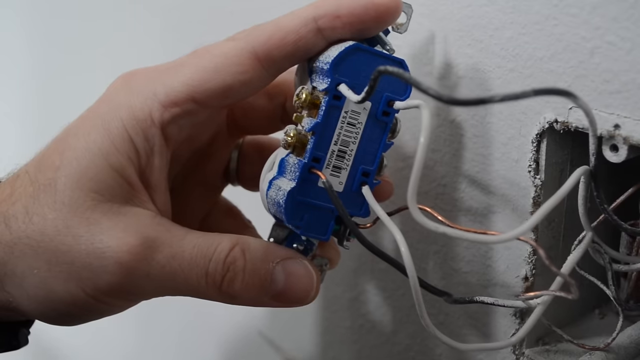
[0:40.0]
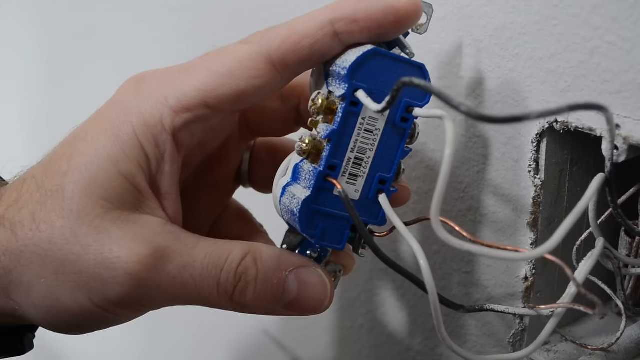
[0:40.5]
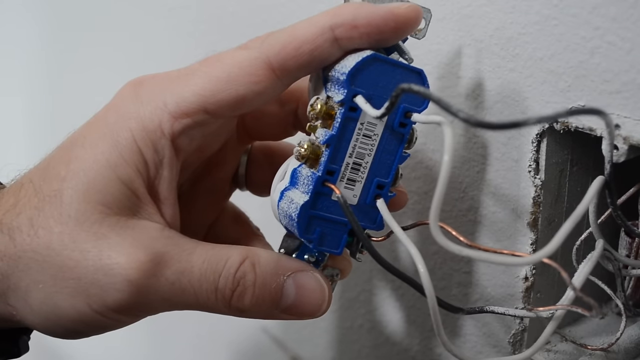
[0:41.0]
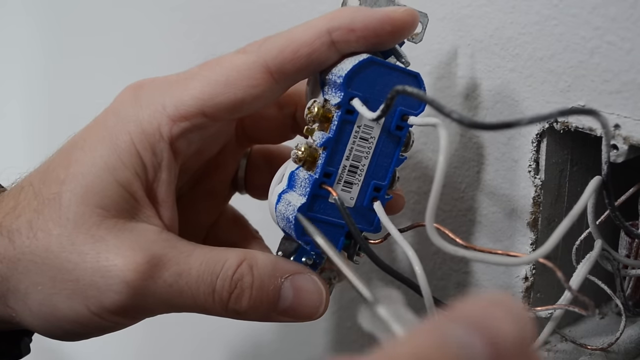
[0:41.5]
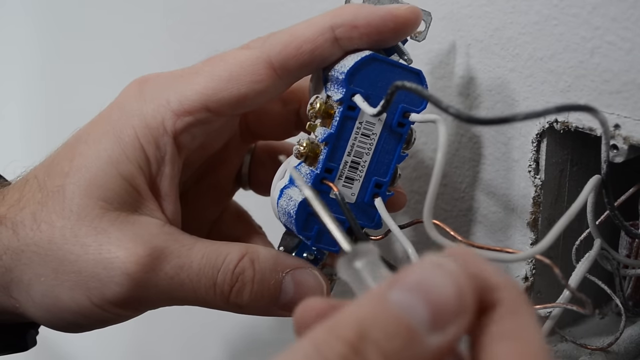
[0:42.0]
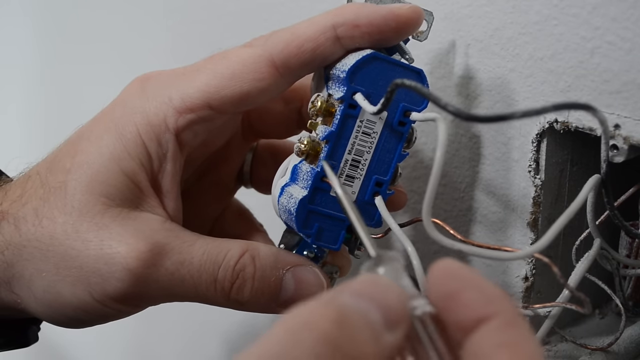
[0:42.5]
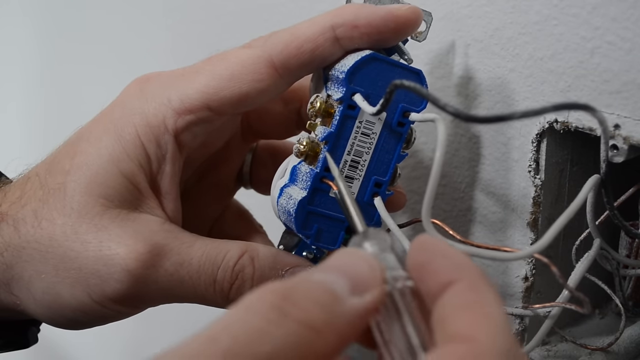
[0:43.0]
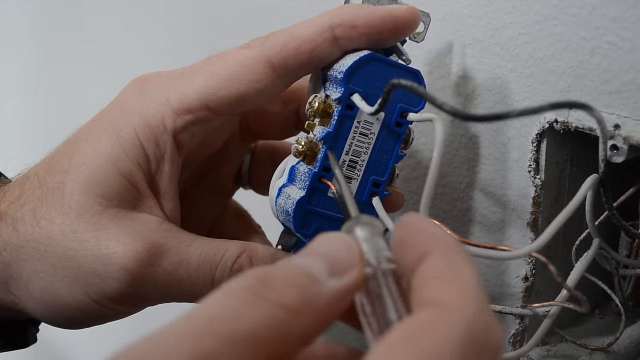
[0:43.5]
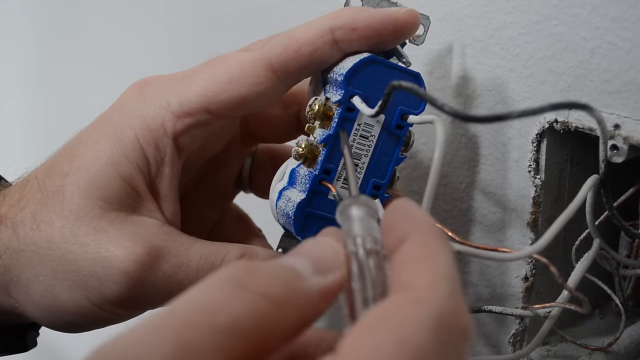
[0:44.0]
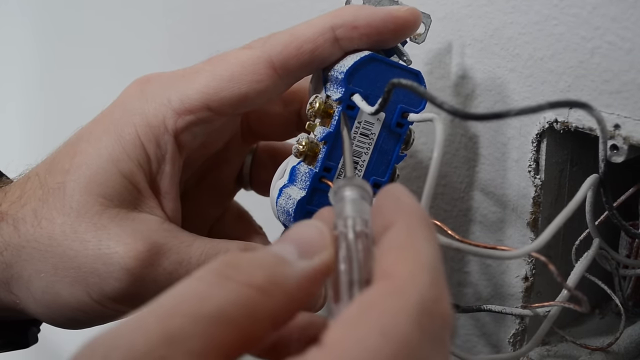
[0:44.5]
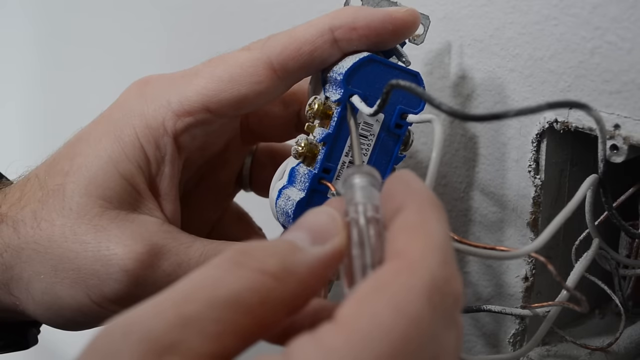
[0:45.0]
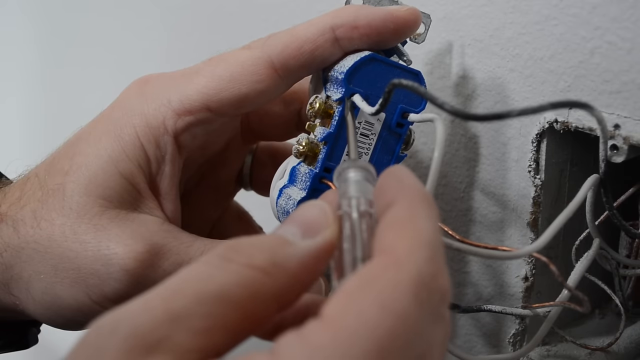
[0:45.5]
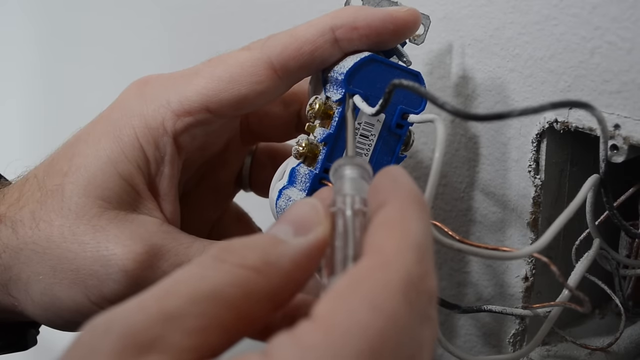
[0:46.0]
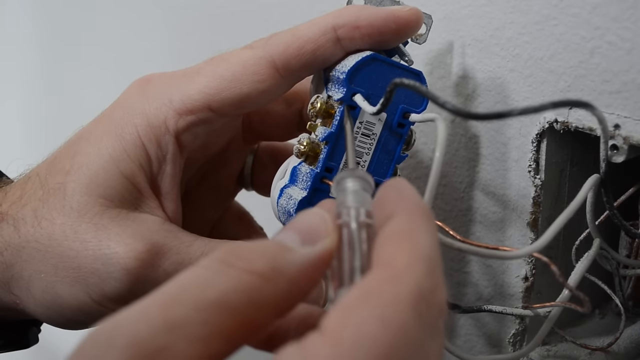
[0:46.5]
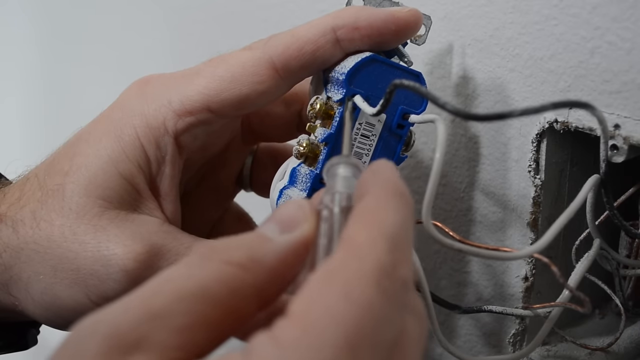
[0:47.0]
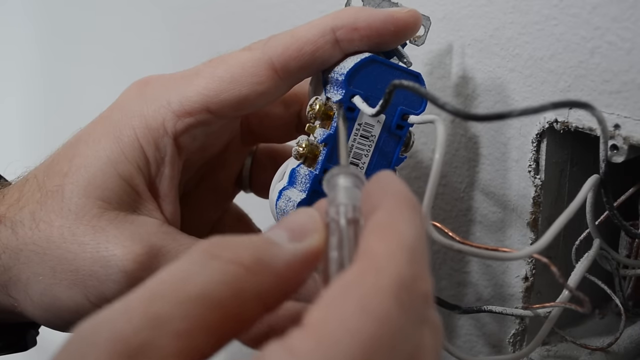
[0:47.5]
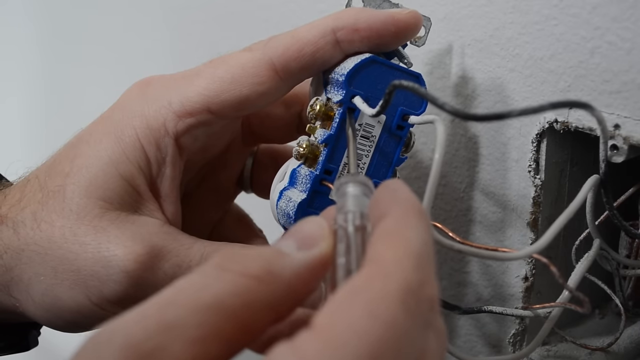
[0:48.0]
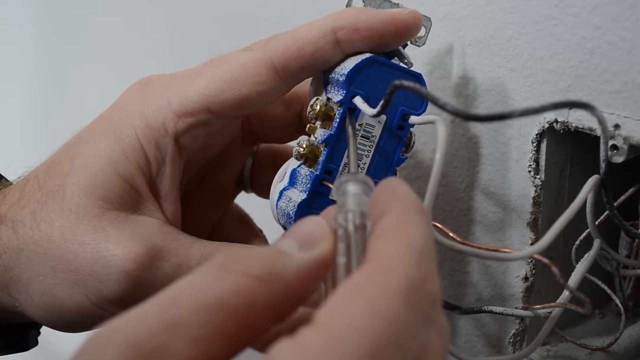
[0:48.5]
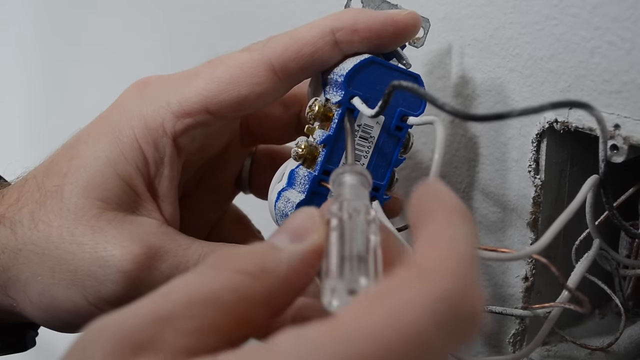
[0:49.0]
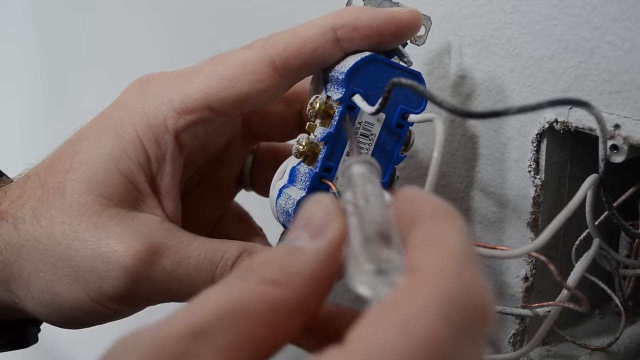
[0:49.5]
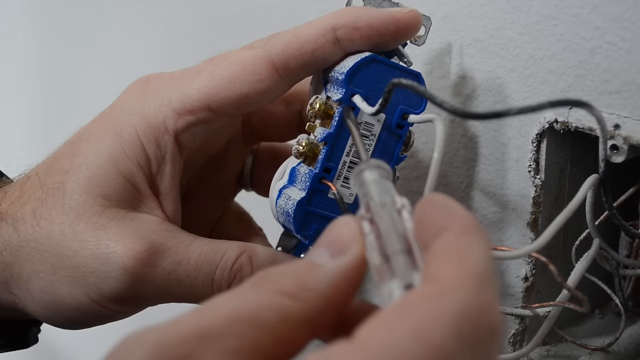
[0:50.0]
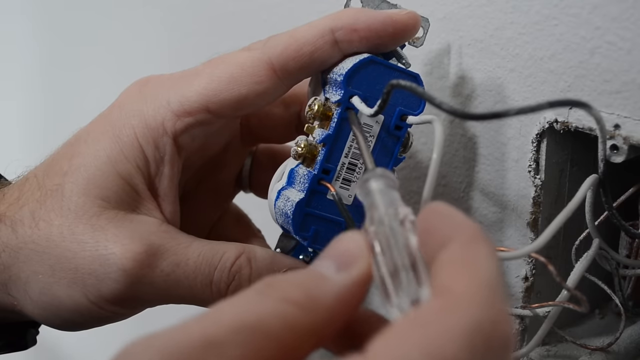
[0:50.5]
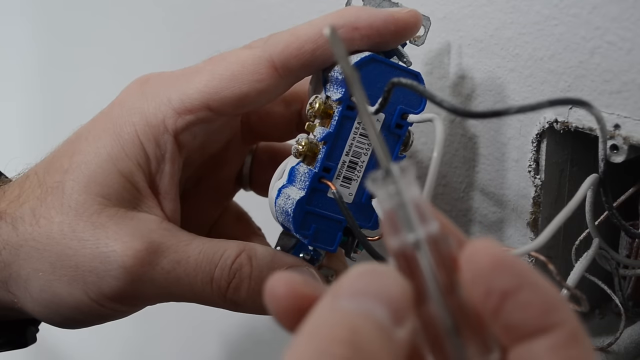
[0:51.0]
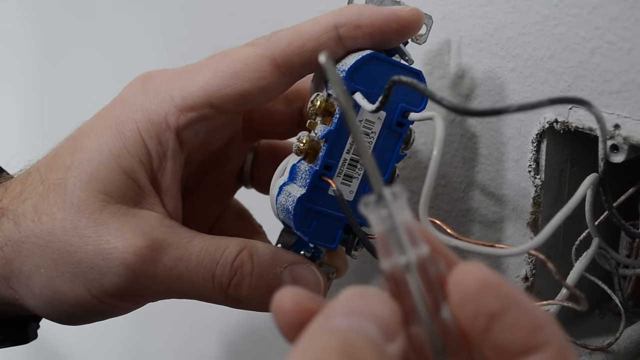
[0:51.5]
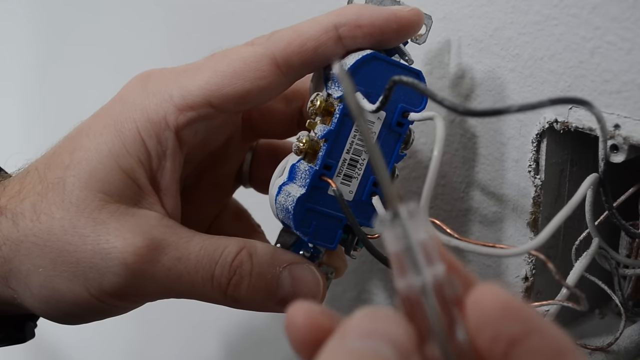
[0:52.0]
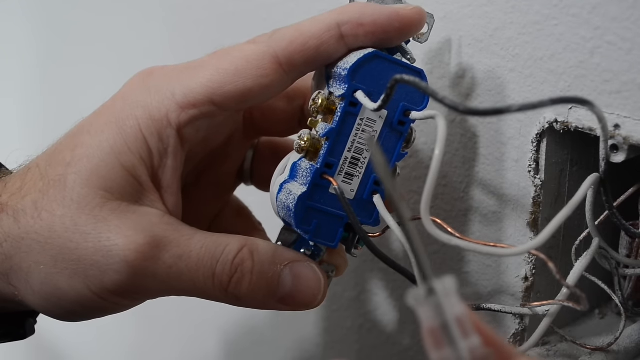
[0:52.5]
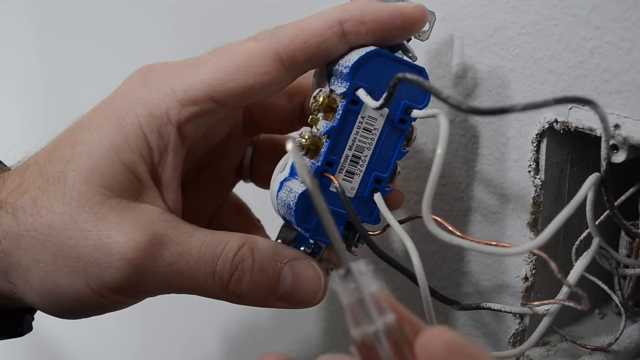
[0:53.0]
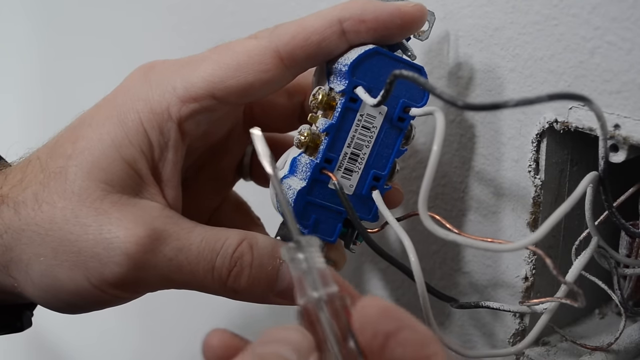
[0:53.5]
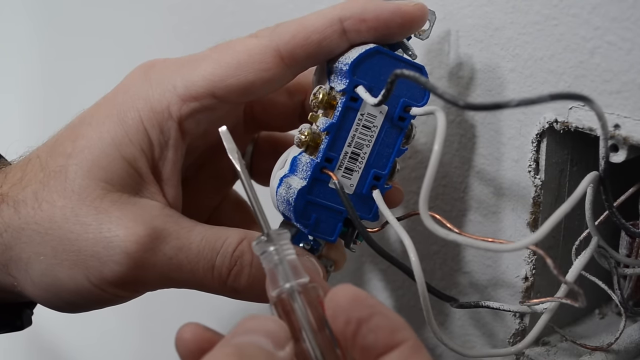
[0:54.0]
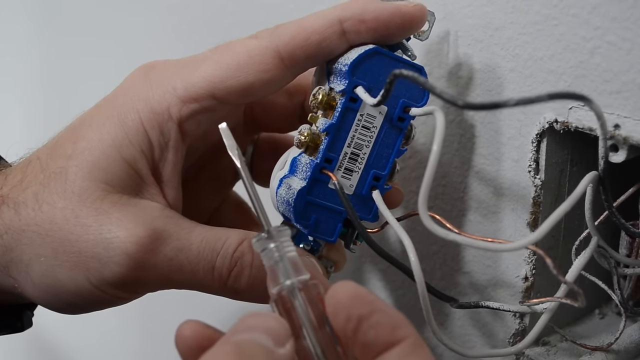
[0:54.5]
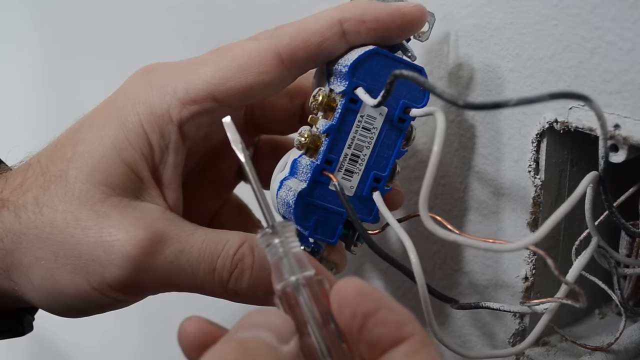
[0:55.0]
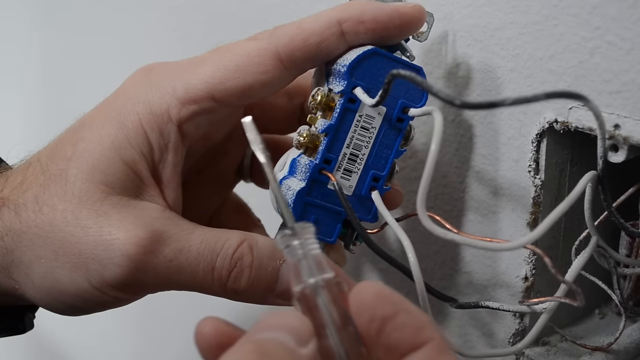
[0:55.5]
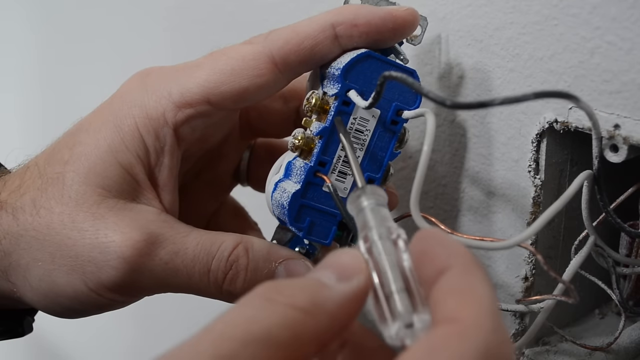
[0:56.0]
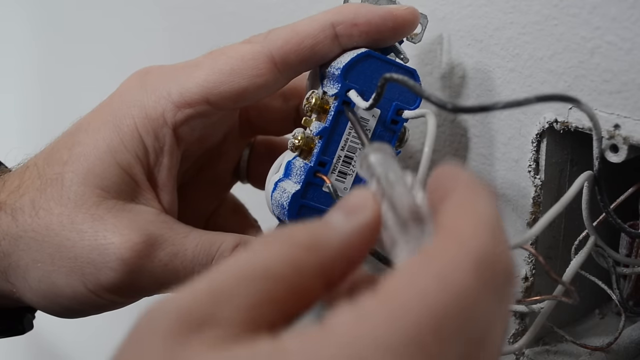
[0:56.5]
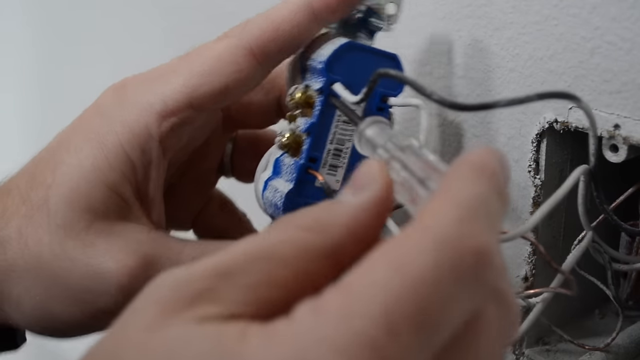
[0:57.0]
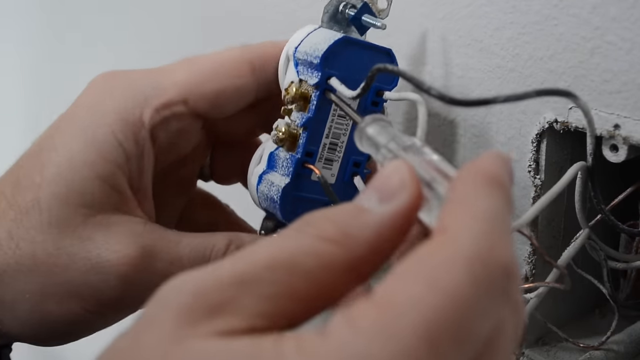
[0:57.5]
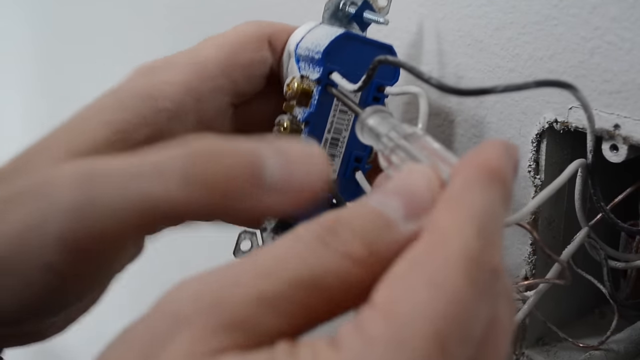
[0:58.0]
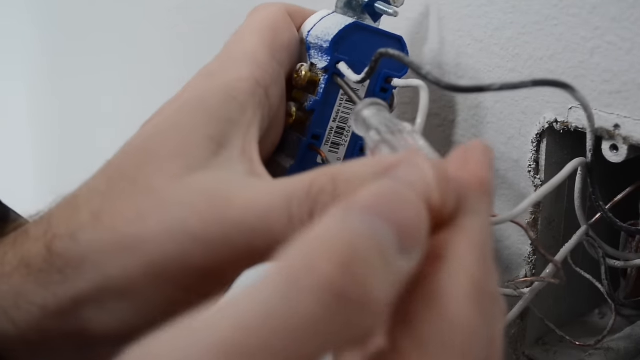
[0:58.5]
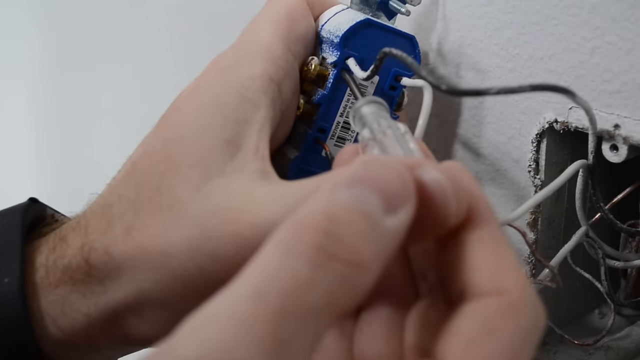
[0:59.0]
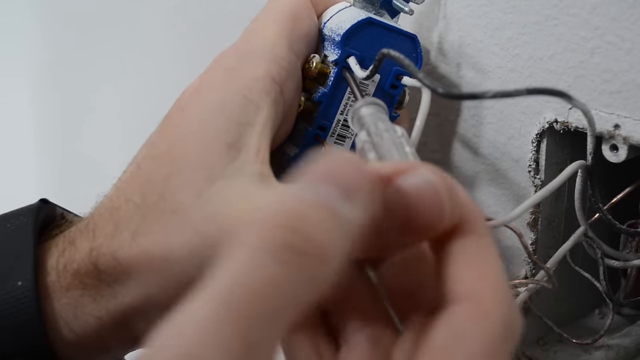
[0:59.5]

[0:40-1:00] With the two screws already unscrewed and loosened, the man uses a screwdriver, showing its size, and puts it into the hole for the first wire as he tries to pull that wire off.